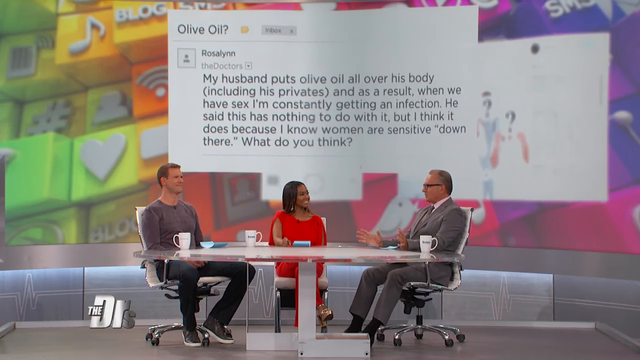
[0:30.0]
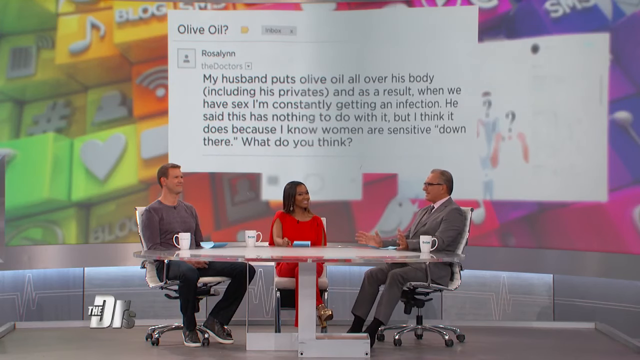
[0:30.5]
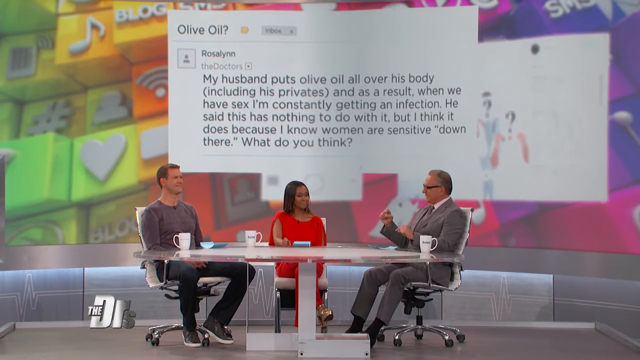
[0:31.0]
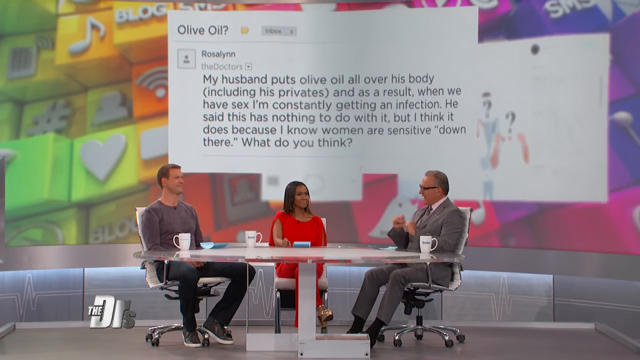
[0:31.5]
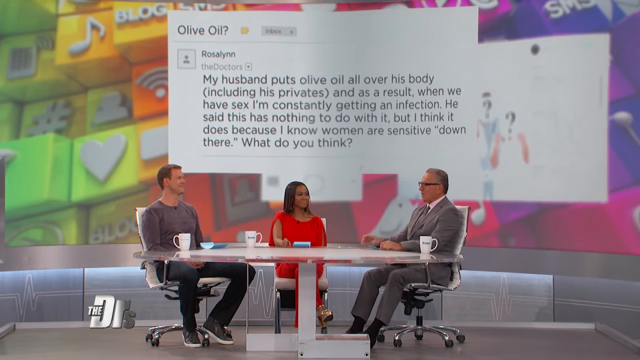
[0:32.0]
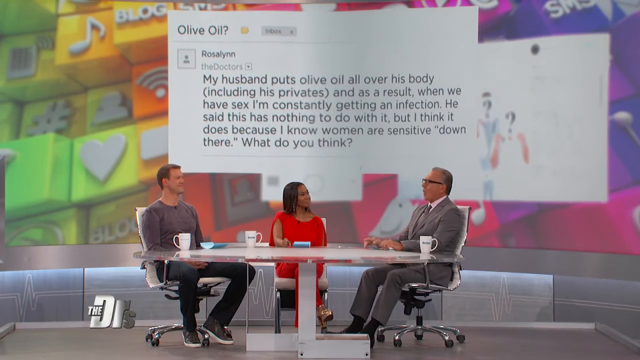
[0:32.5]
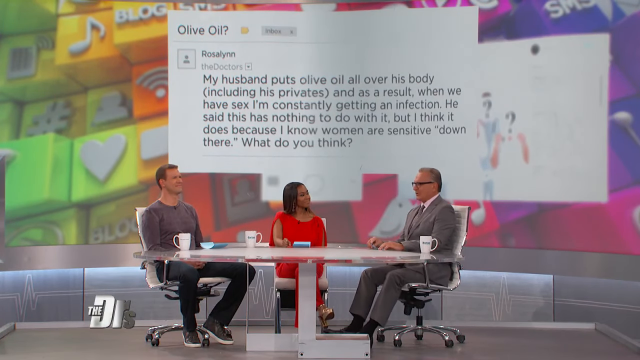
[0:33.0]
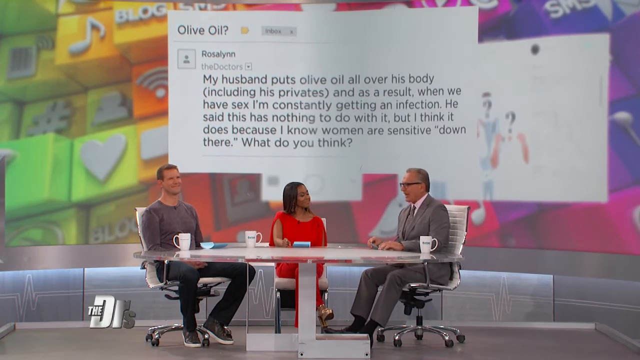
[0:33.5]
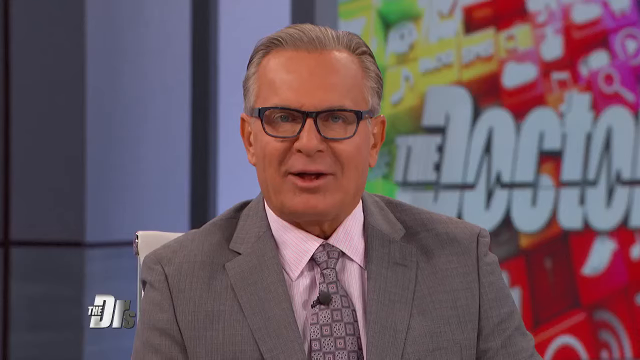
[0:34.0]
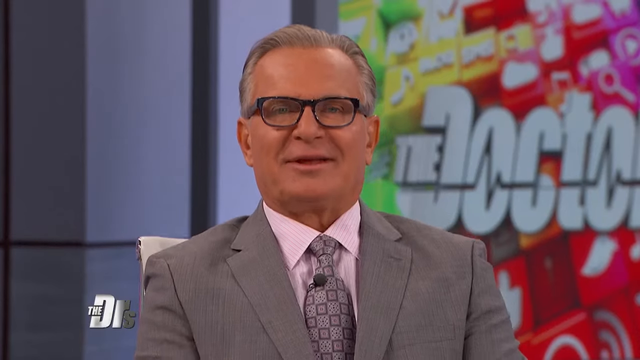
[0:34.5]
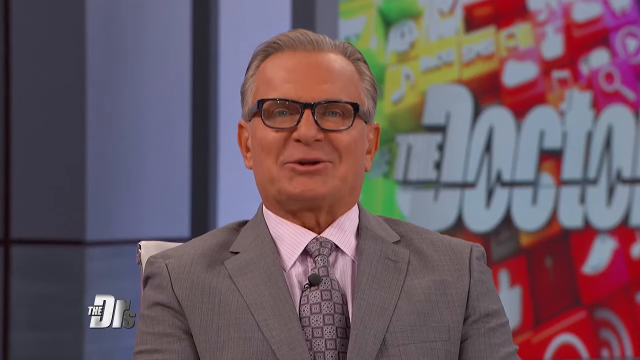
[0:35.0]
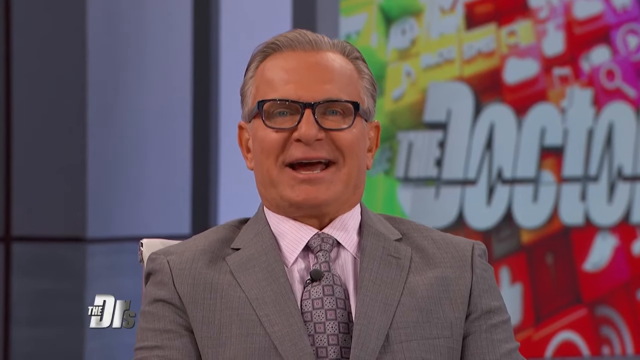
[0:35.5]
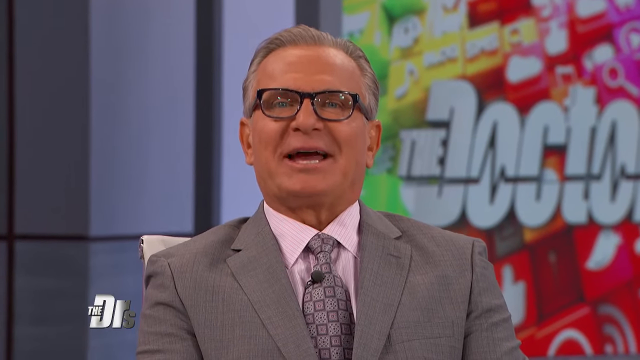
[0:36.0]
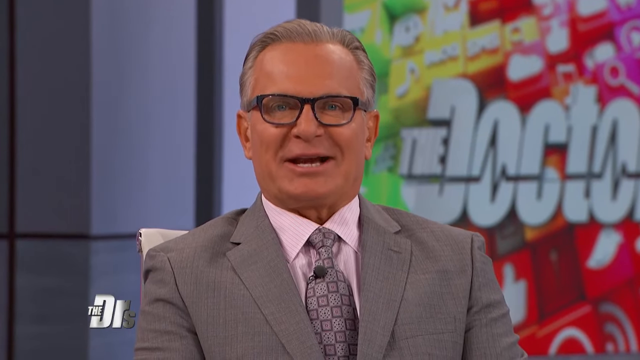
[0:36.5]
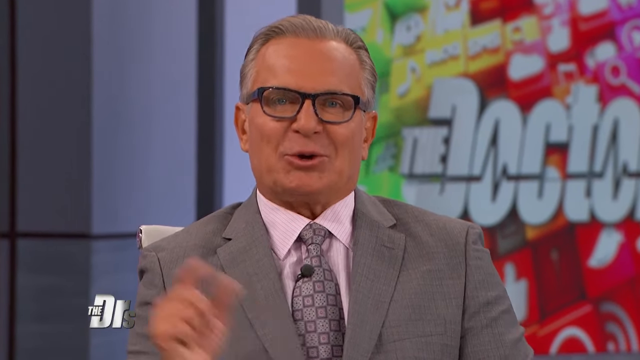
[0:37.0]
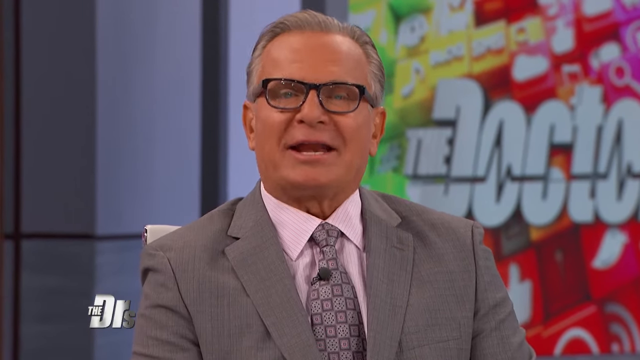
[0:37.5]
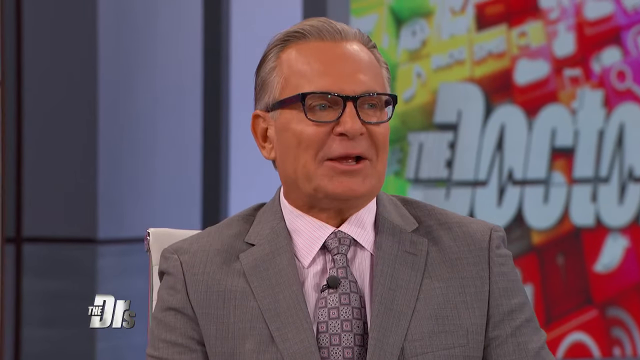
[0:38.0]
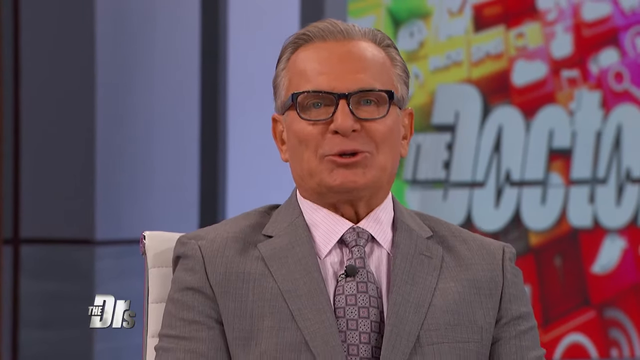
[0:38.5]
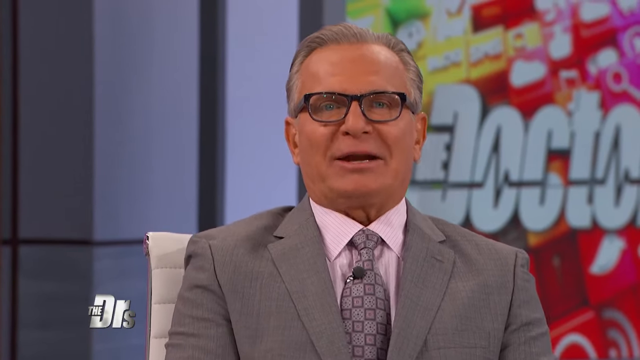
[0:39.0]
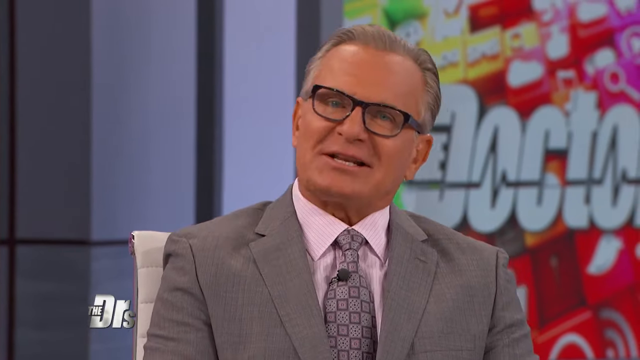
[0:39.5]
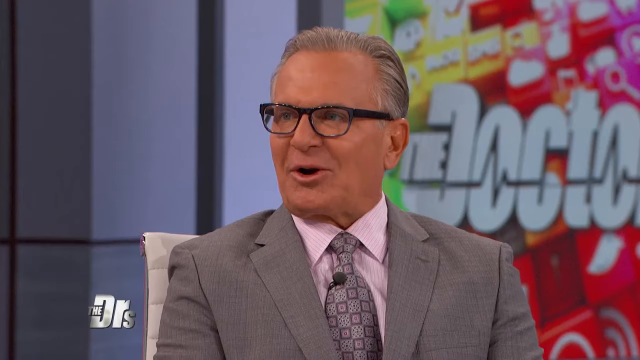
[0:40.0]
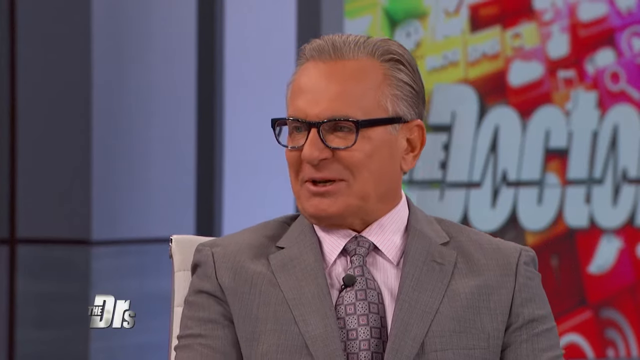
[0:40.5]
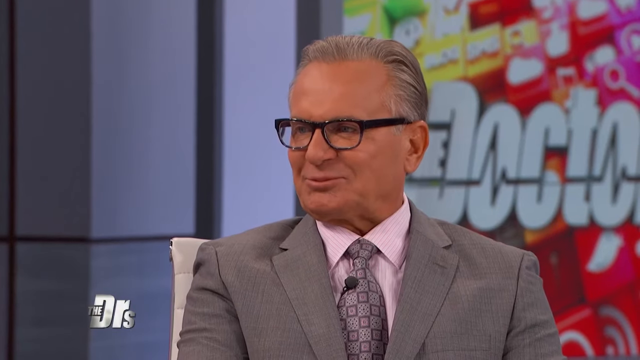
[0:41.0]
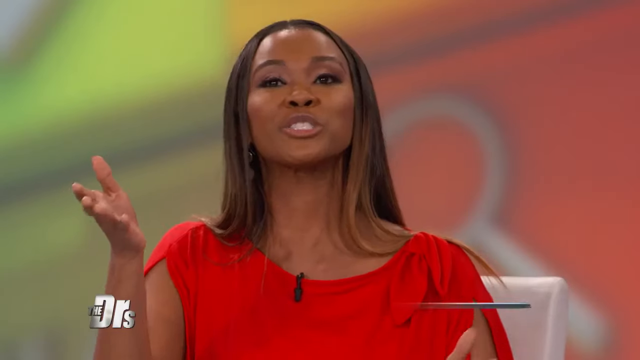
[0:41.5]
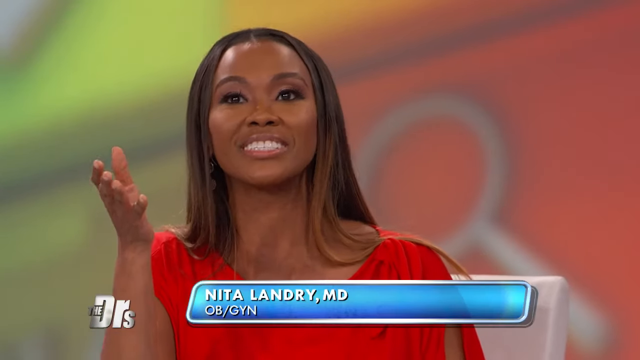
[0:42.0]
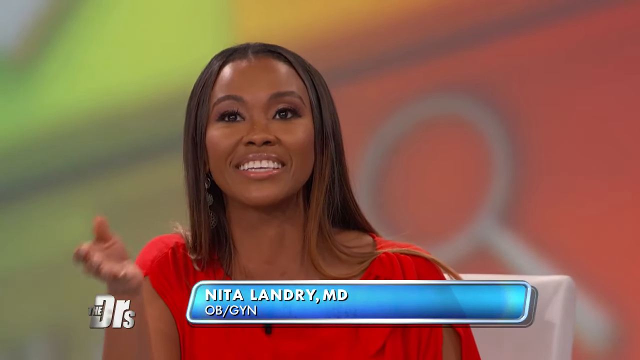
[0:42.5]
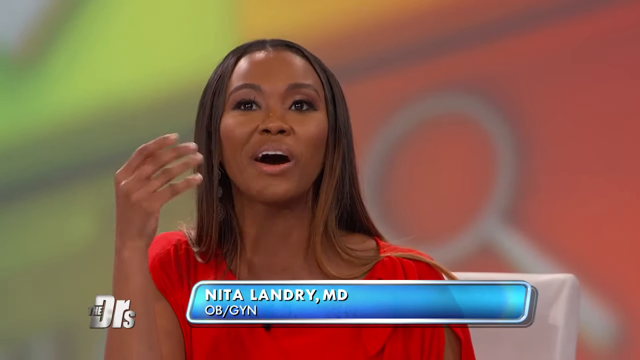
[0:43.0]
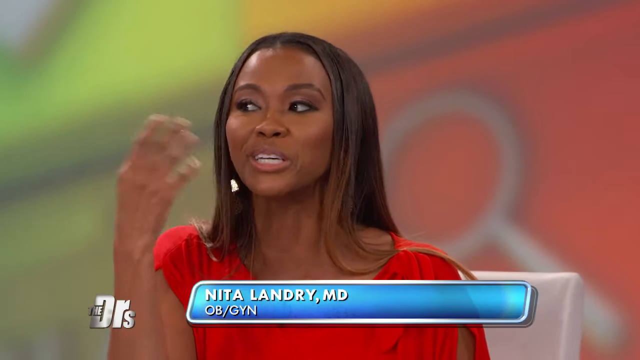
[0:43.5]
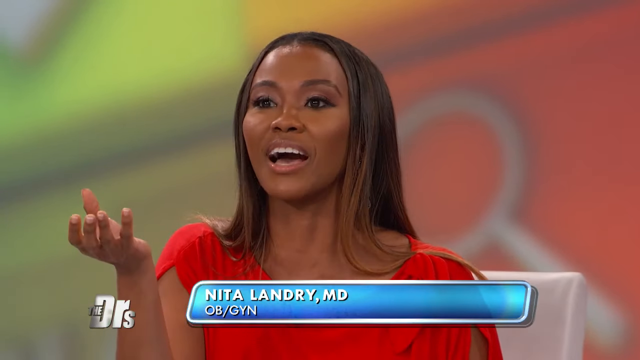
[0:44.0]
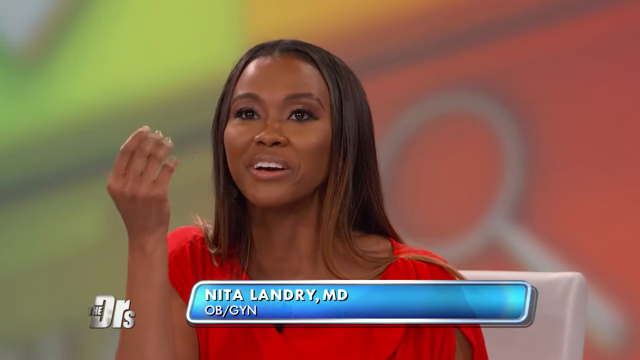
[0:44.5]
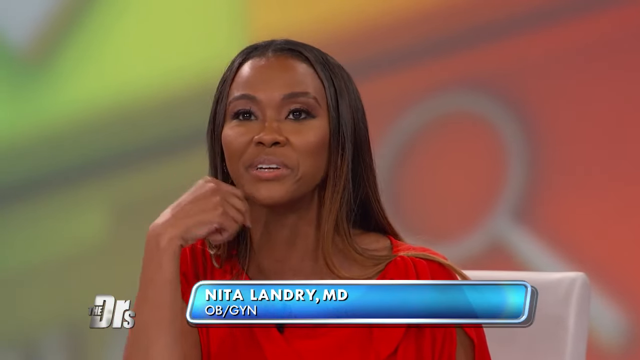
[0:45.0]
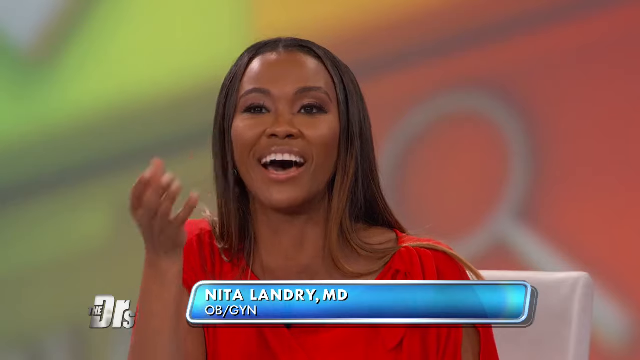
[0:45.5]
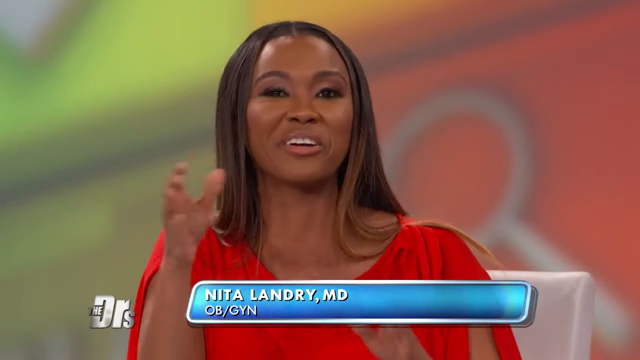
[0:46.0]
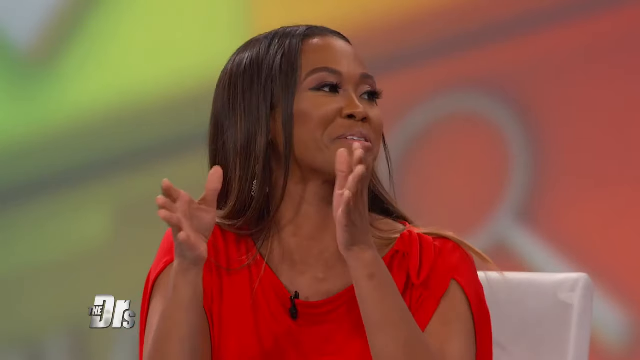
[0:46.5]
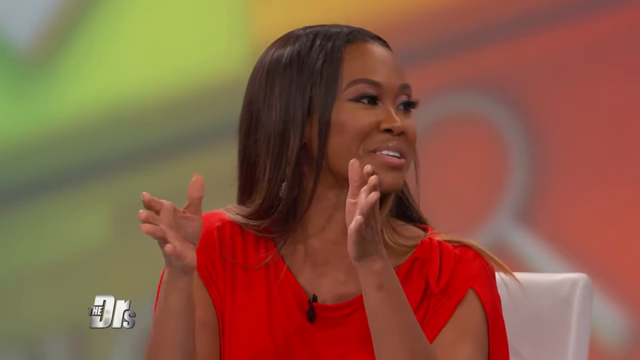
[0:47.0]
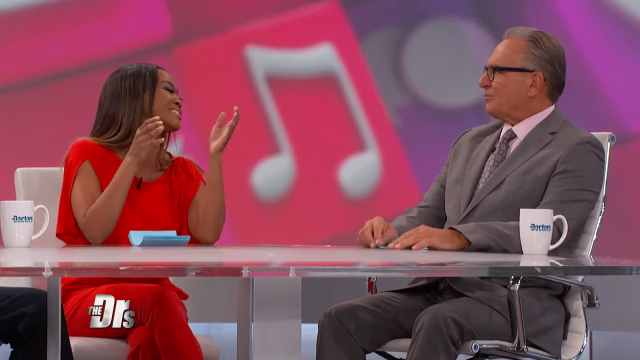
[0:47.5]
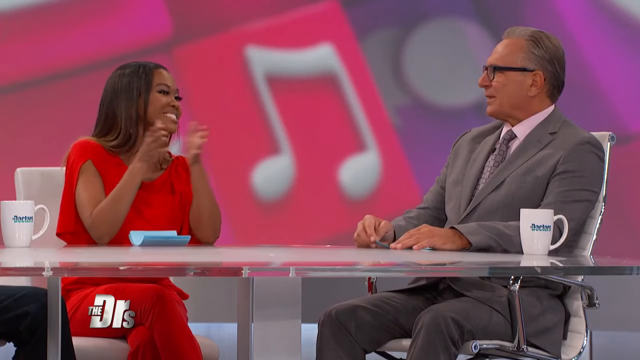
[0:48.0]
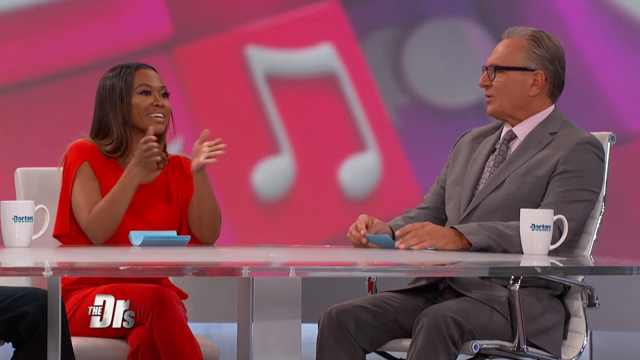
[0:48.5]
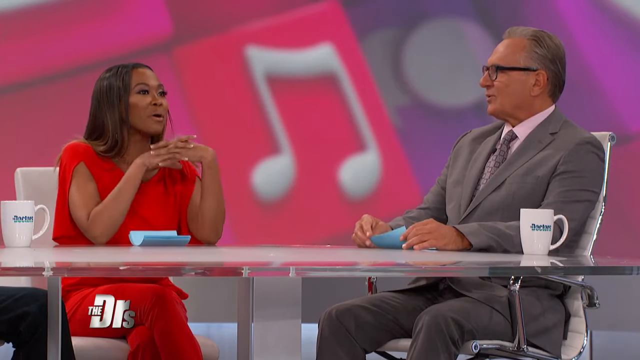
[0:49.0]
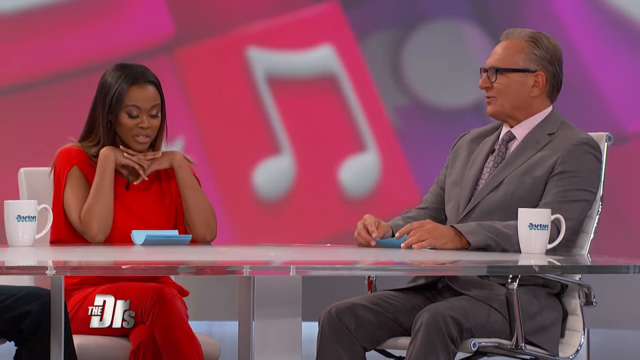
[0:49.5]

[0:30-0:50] The three hosts are sitting at the table. The man in the gray suit lays his hands open on the table, explaining some sort of point with them, then points, then places his hands palm down on the table and rocks forward. The camera cuts directly to him as he talks to the camera and throws his right hand up to make a point. He looks to his co-host on his right, who places her elbow on the table with the back of her hand facing out and the palm facing her face. She speaks, making a point, subtly puts her hand under her chin and takes it away, then puts both hands up with the palms facing one another. She leans over to the left to make a point to one of her co-hosts, then clasps her hands together, locking her fingers in place.